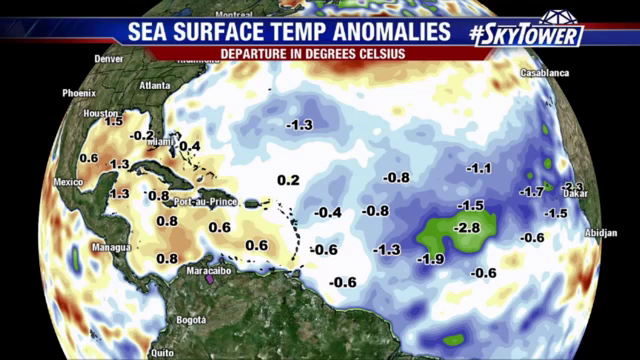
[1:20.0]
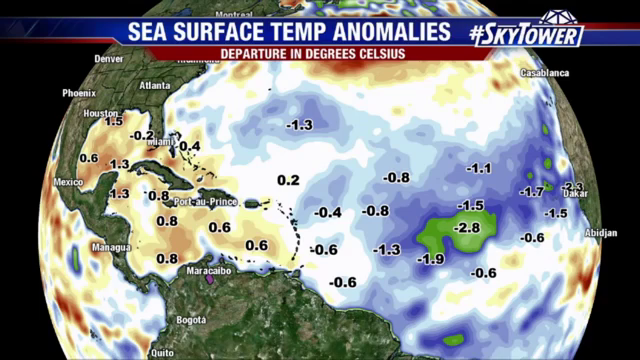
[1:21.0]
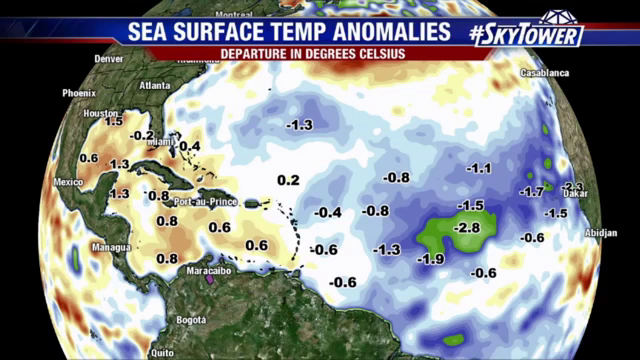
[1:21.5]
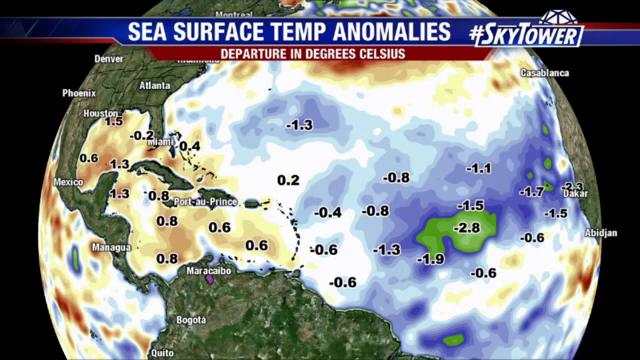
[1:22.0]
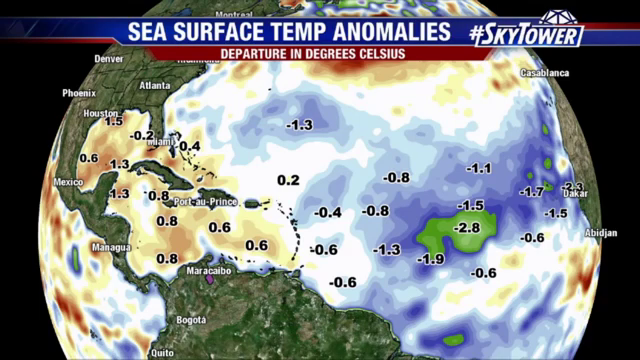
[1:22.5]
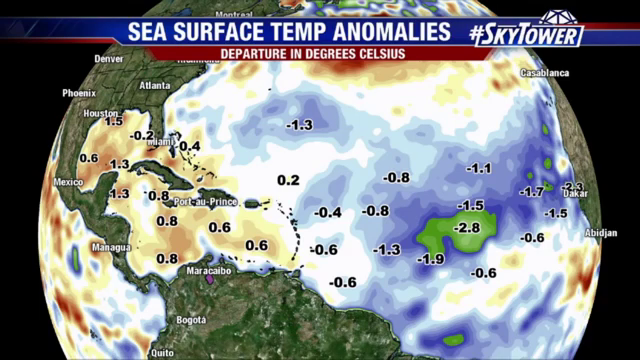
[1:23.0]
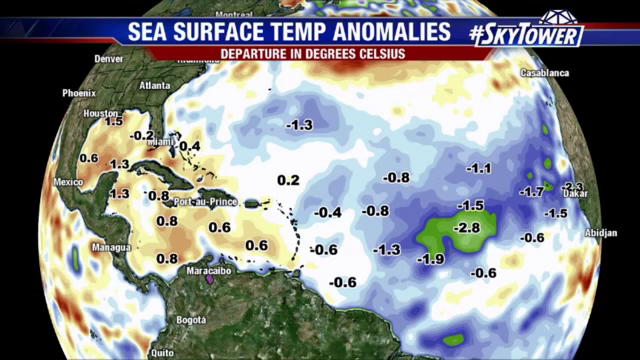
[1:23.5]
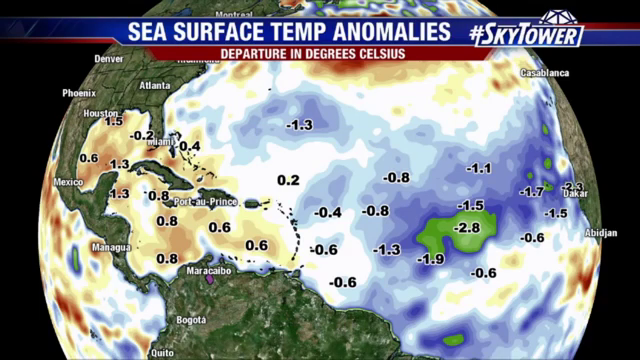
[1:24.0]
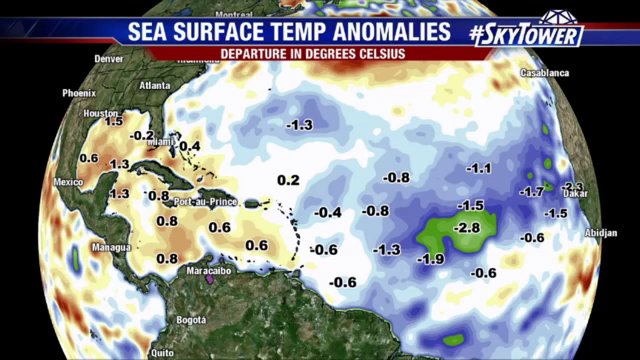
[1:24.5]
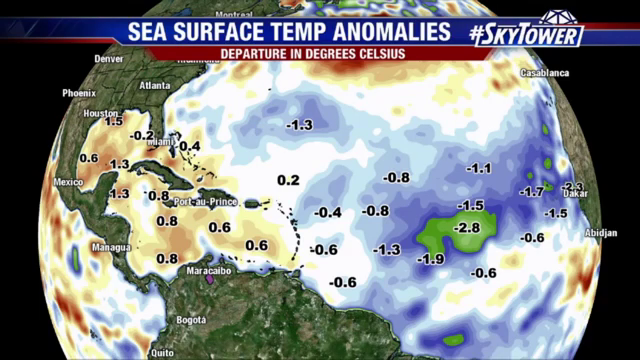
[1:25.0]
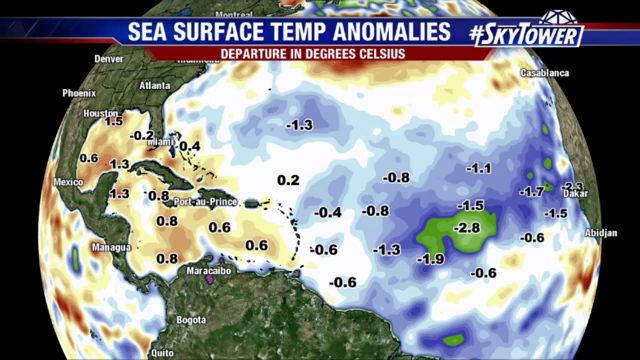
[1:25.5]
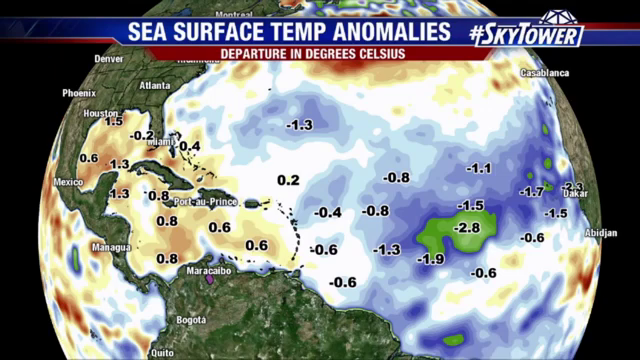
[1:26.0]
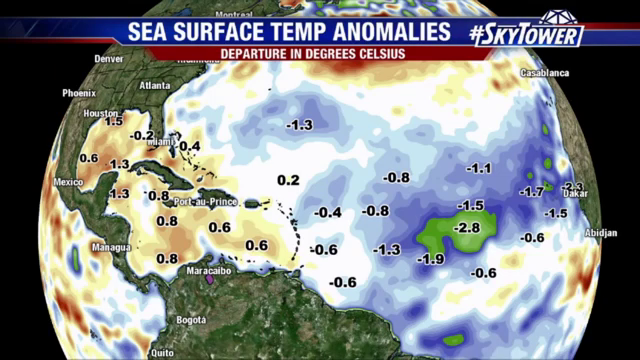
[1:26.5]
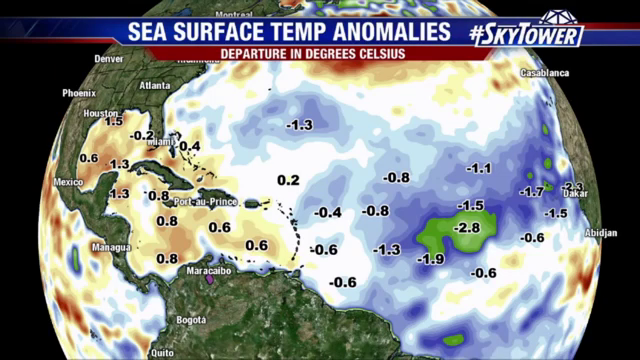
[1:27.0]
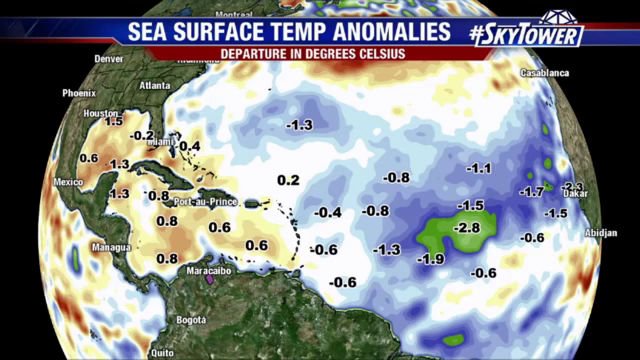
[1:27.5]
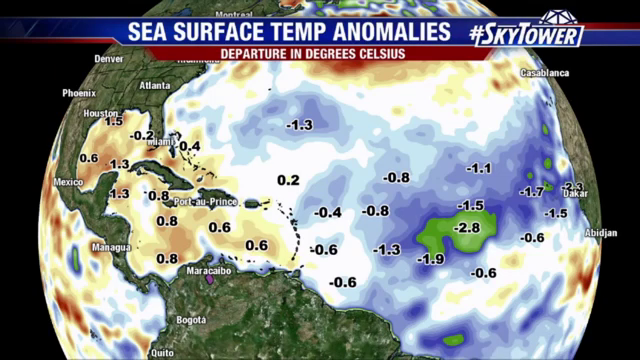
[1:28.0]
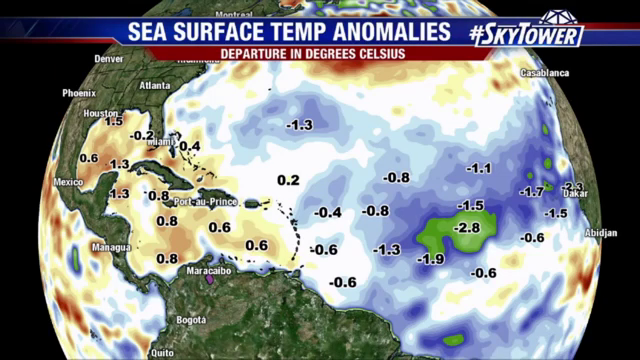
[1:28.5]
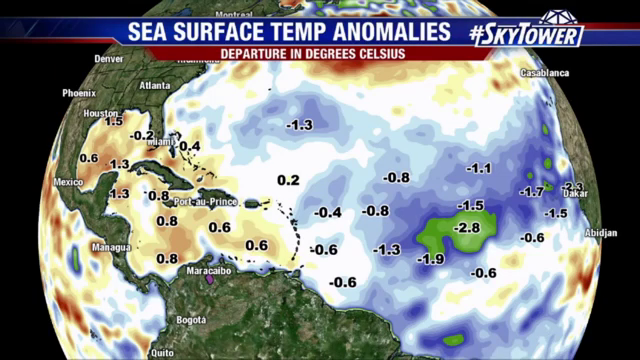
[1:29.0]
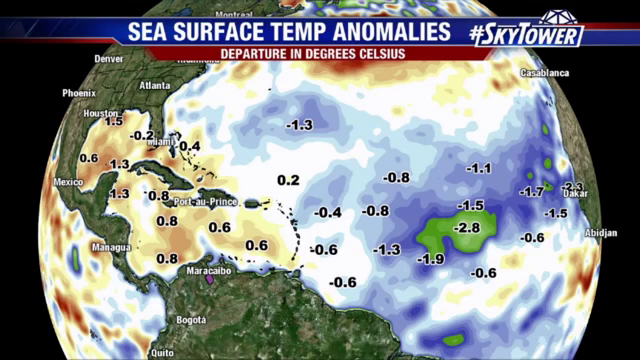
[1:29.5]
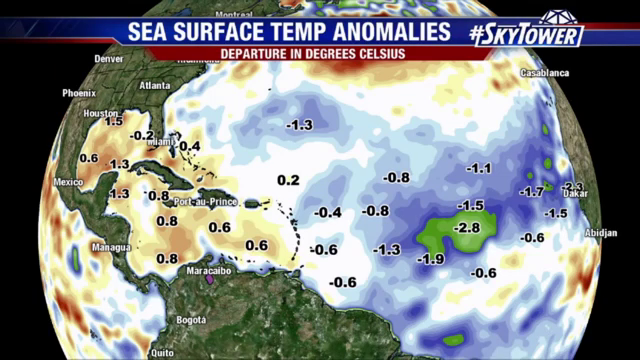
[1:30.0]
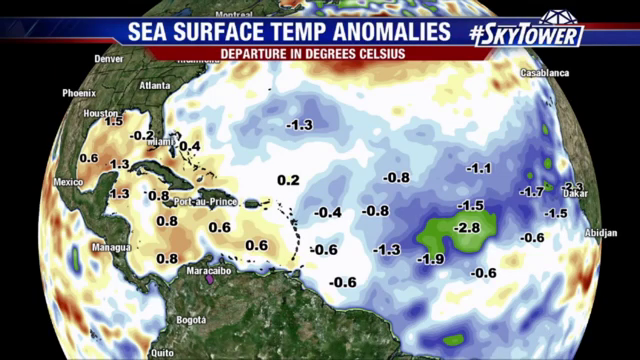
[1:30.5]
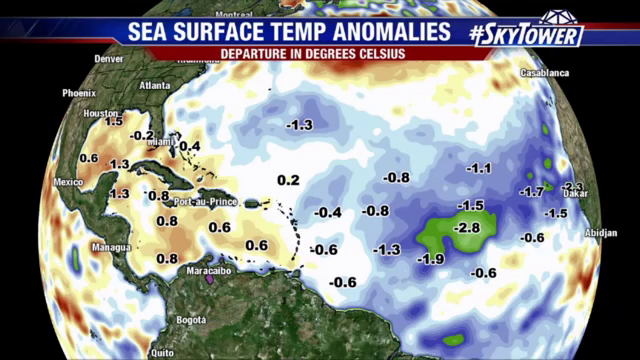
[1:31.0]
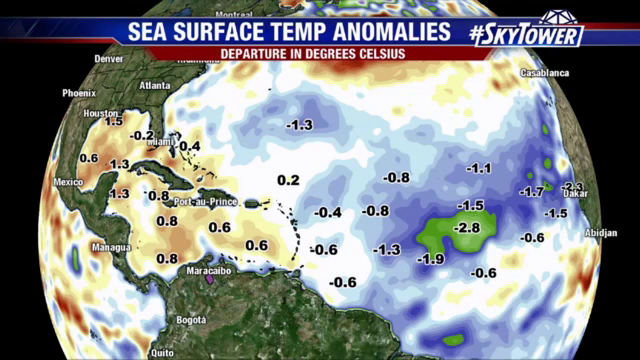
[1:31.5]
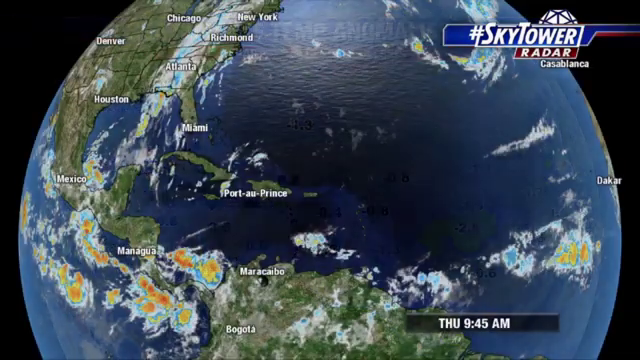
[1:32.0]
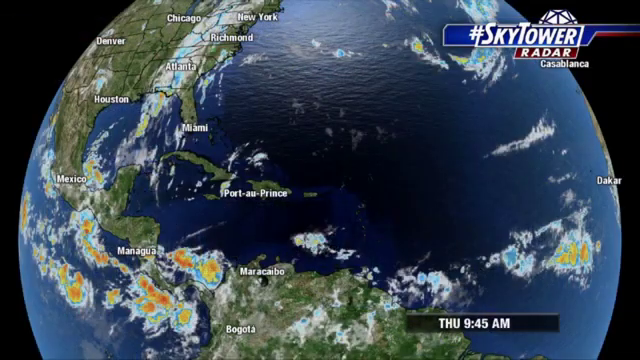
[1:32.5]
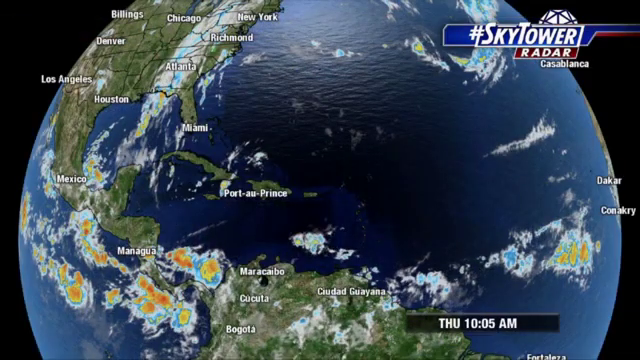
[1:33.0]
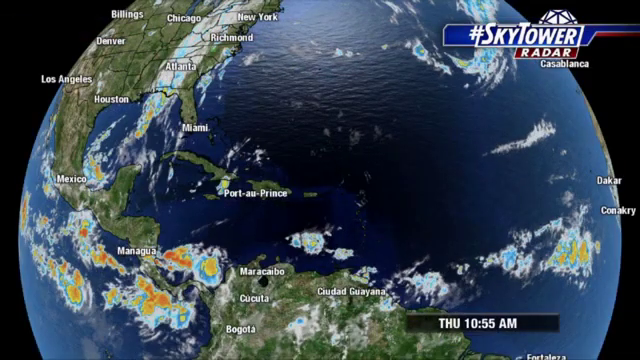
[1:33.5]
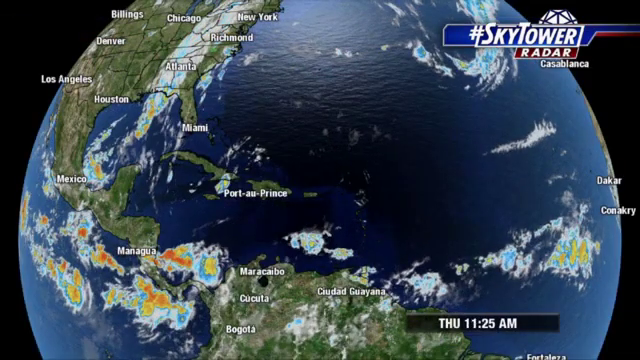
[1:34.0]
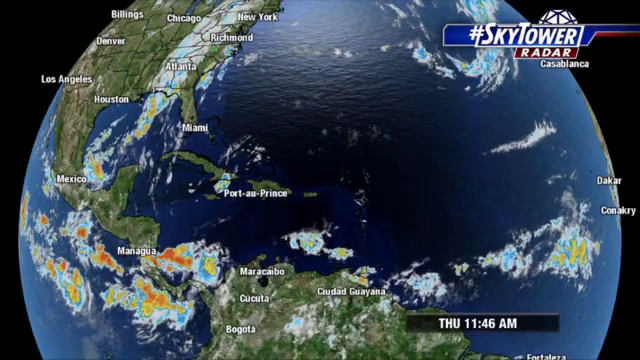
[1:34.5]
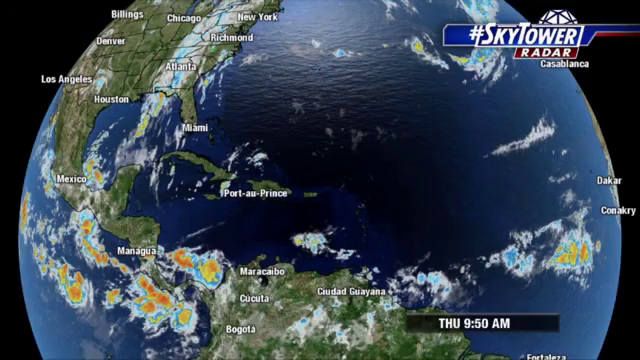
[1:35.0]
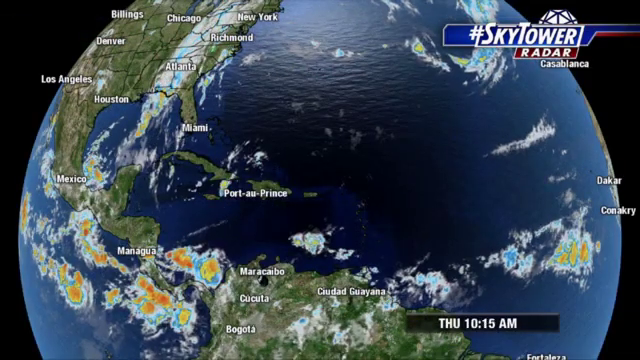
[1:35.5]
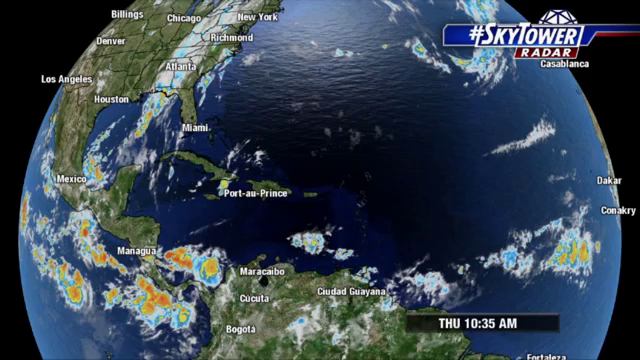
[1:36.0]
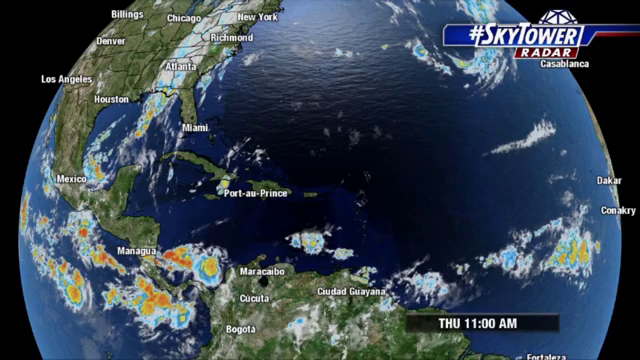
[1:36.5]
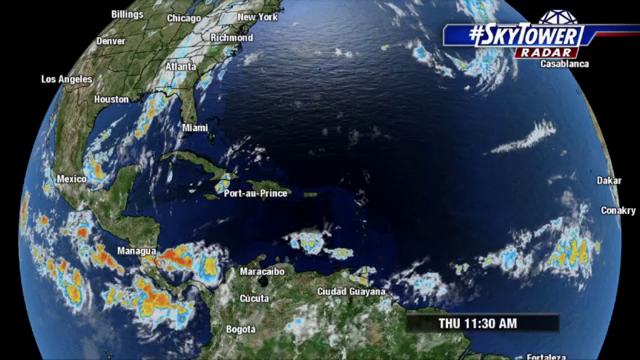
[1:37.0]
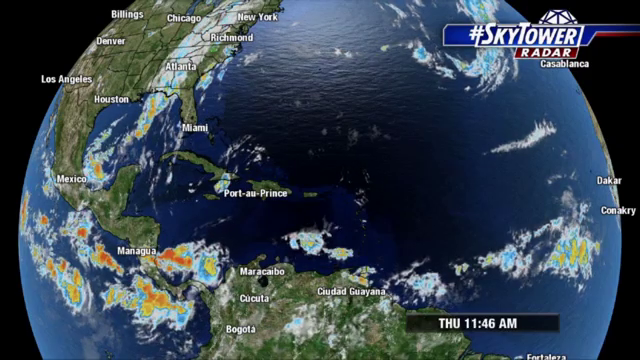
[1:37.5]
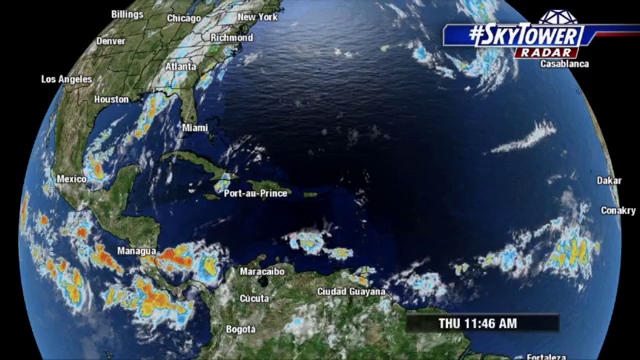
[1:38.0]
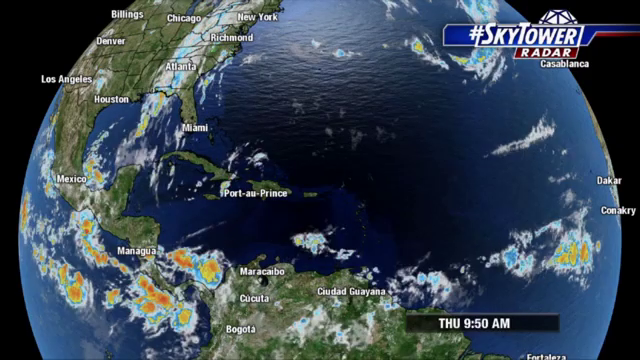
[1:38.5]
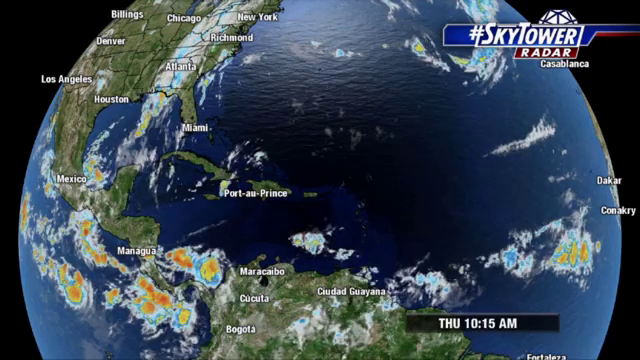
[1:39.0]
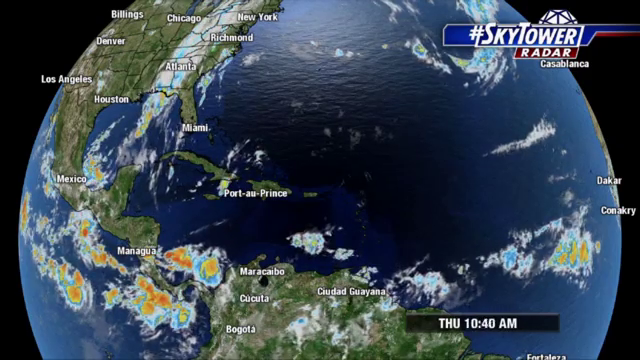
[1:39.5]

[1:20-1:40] The sea surface temp anomalies globe remains on screen with its colors and numbers for the departure in degrees Celsius. The view then pans to another picture of the globe, this one showing mostly the water, with Los Angeles, Denver, Chicago, Richmond, Atlanta and New York labeled along with the sea surface departure in degrees Celsius. Positive temperatures are in yellow and negatives are in blue. The globe is set against a black background, and Sky Tower appears. Cities such as Okar, Abidjan, Casablanca and Maracaibo are shown, and over the water other places appear, including Guayana, Maracaibo, Cucuta and Managua. The United States is in the upper left corner, with a lot of blue and white over Atlanta, Richmond and Chicago.